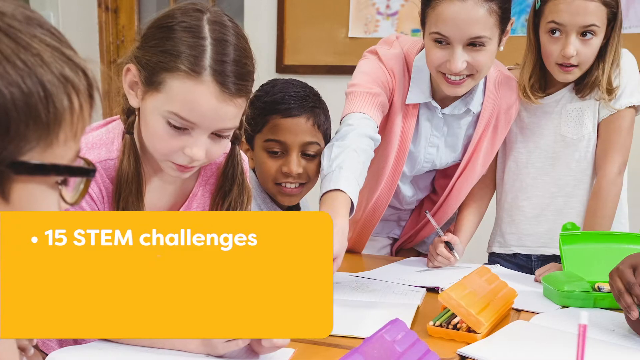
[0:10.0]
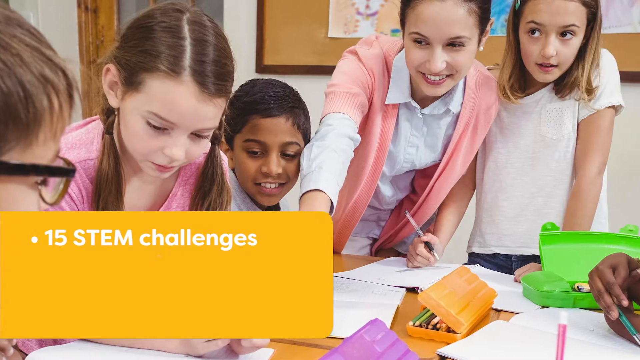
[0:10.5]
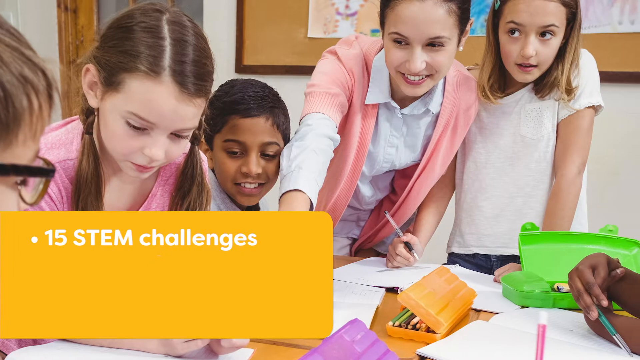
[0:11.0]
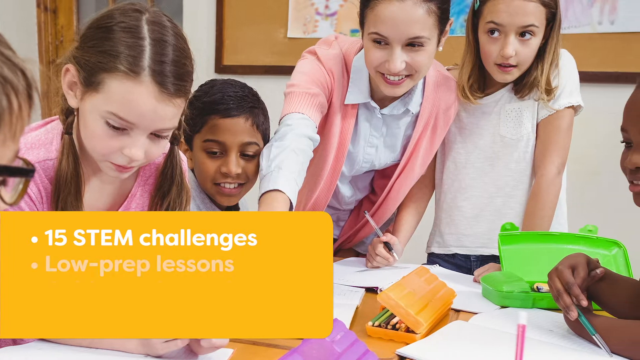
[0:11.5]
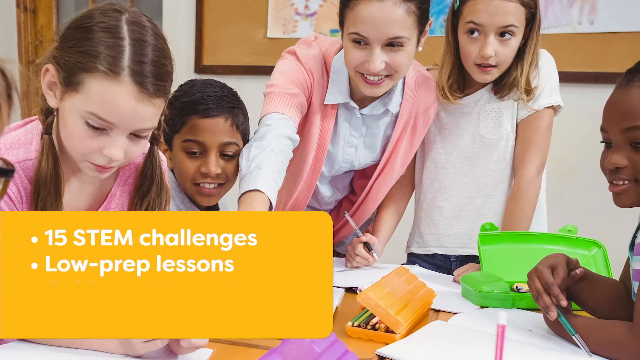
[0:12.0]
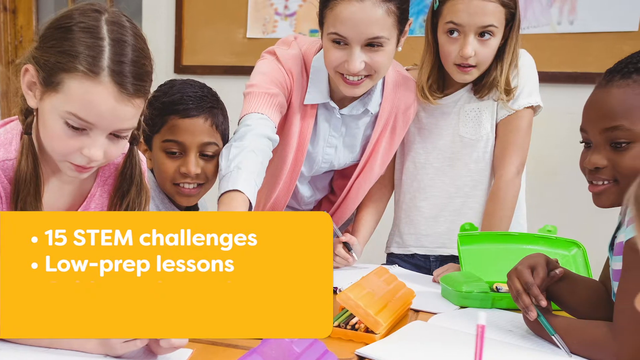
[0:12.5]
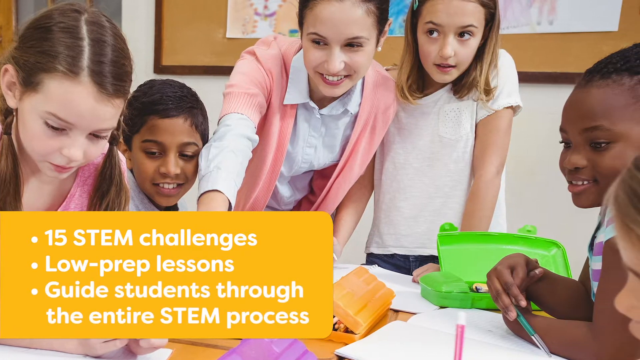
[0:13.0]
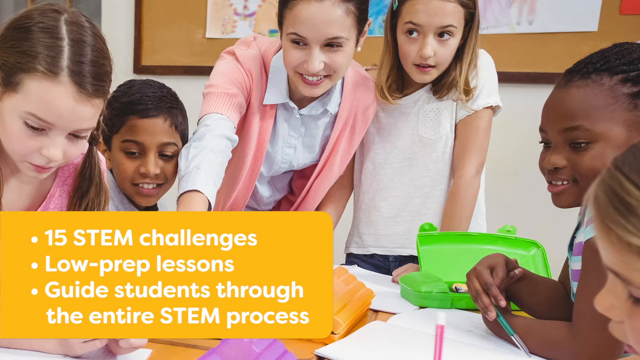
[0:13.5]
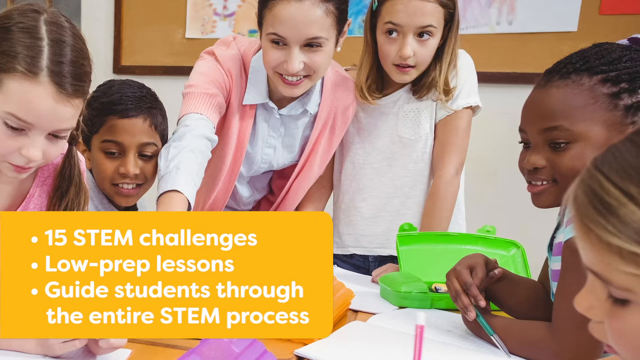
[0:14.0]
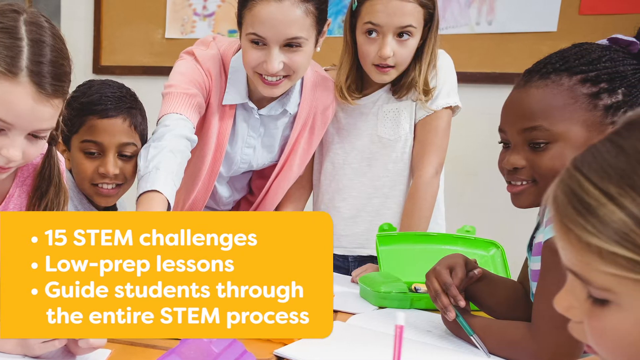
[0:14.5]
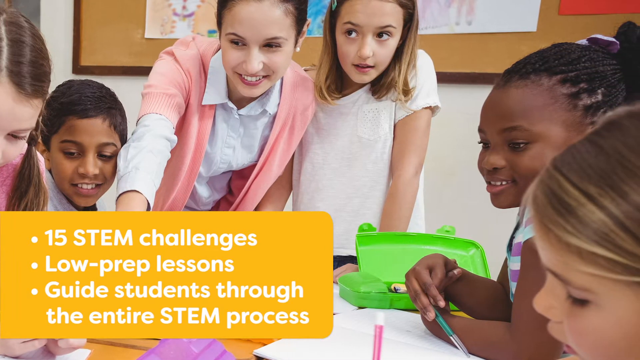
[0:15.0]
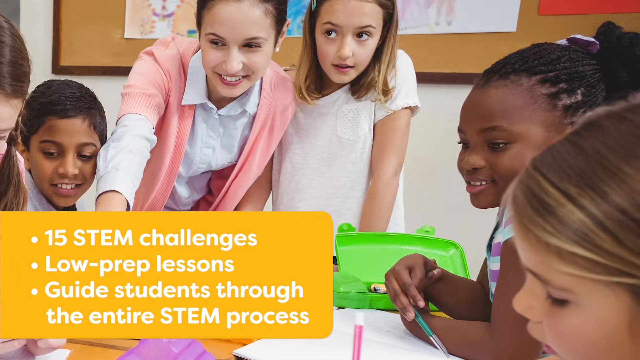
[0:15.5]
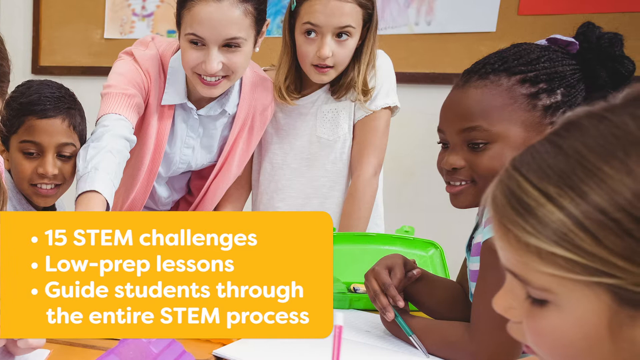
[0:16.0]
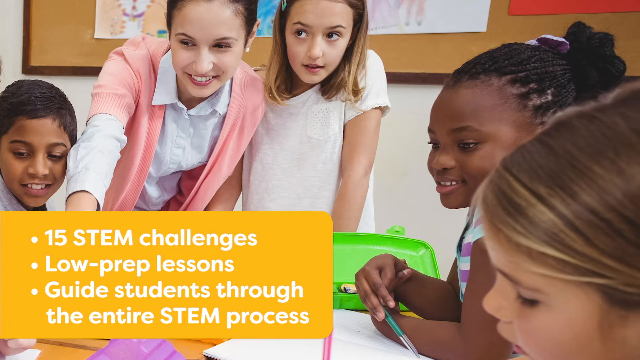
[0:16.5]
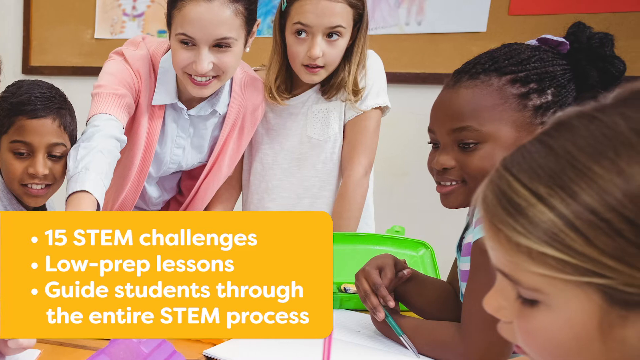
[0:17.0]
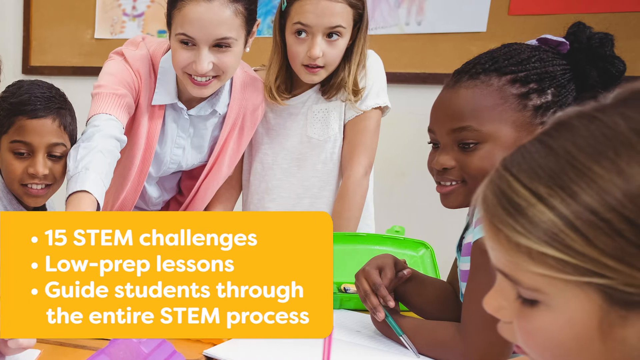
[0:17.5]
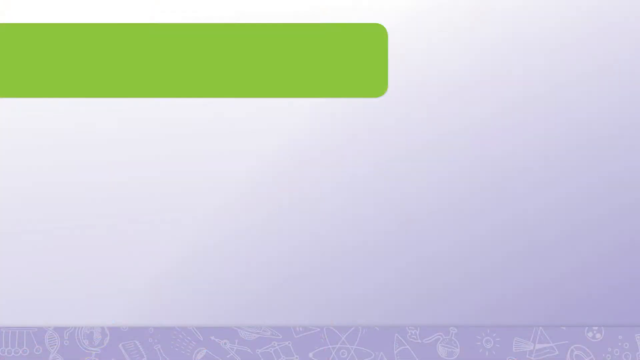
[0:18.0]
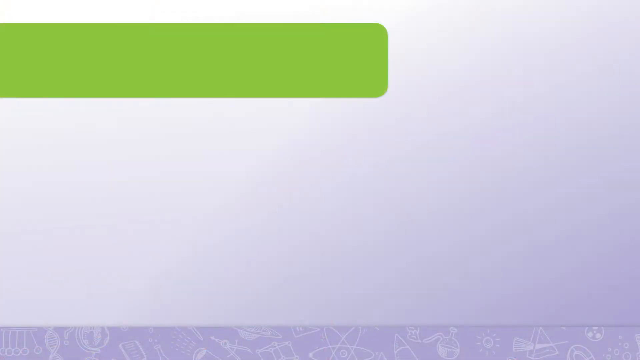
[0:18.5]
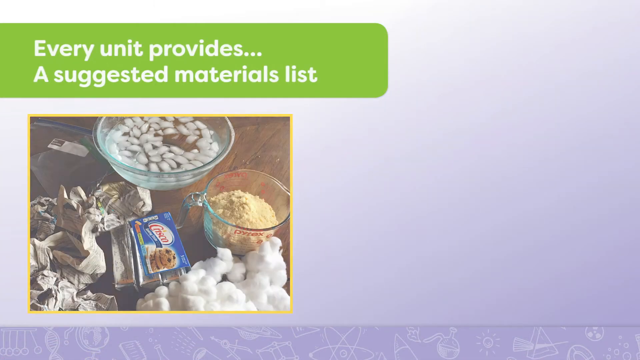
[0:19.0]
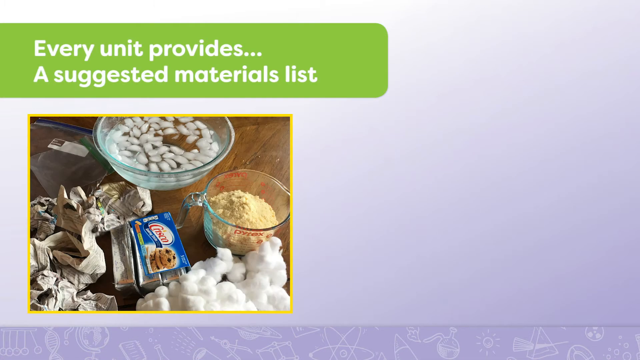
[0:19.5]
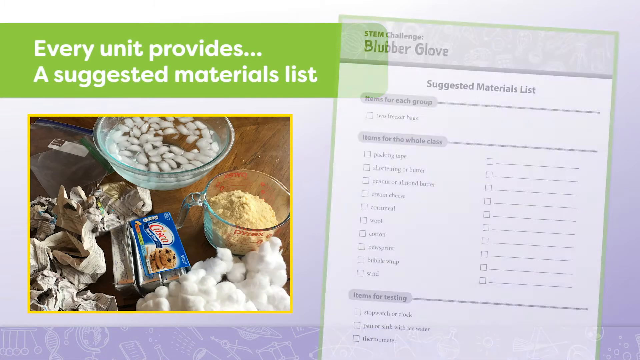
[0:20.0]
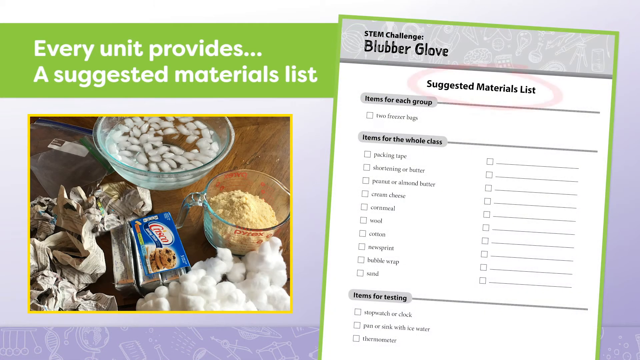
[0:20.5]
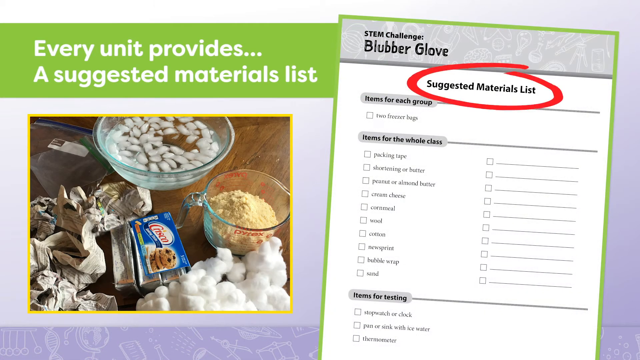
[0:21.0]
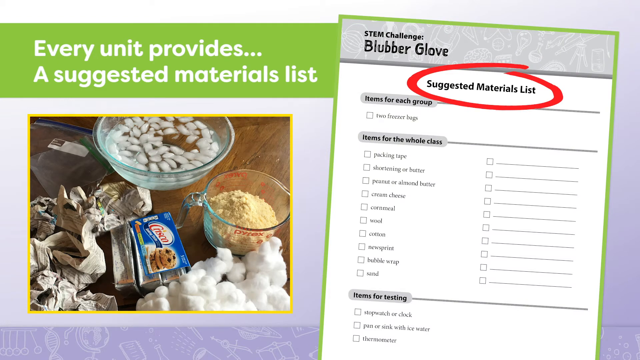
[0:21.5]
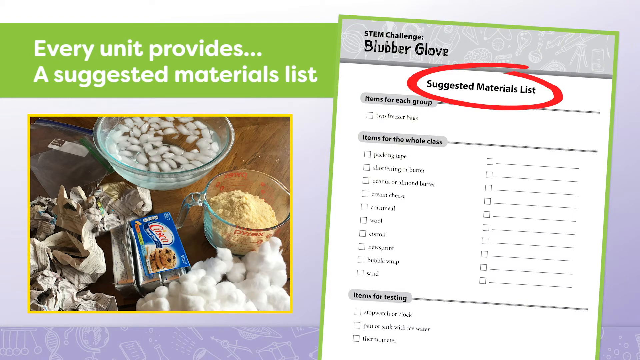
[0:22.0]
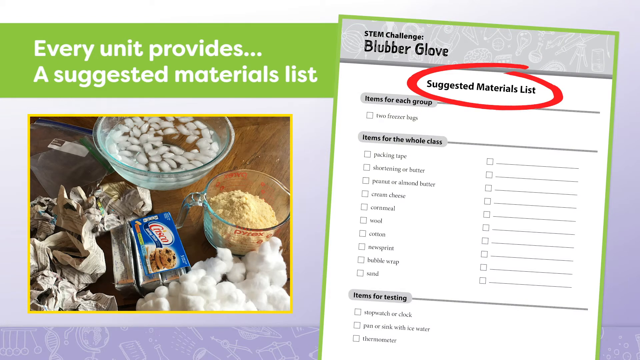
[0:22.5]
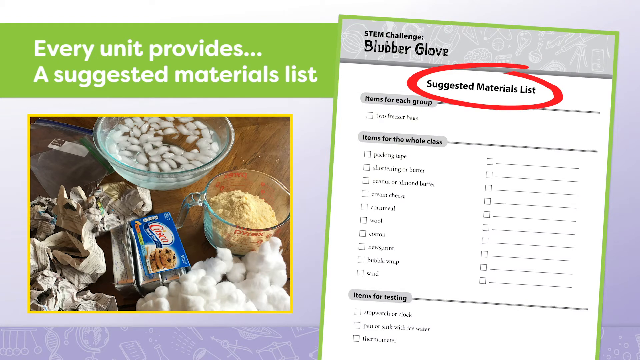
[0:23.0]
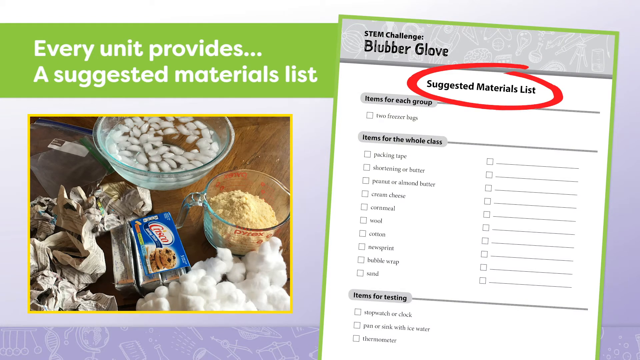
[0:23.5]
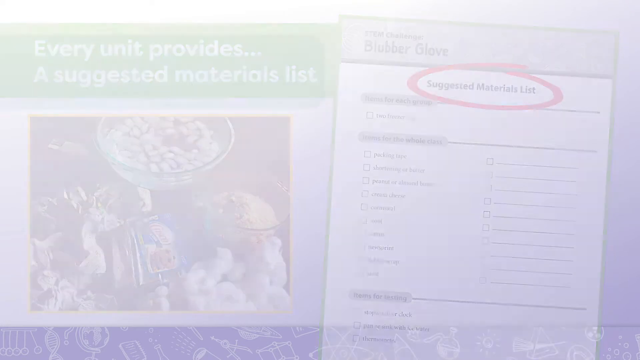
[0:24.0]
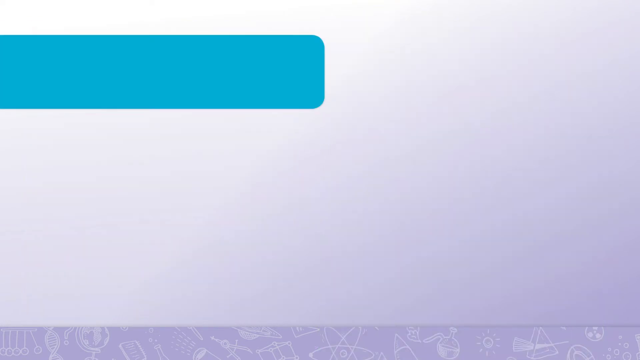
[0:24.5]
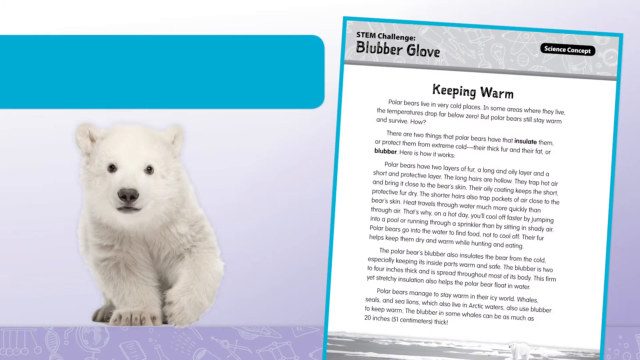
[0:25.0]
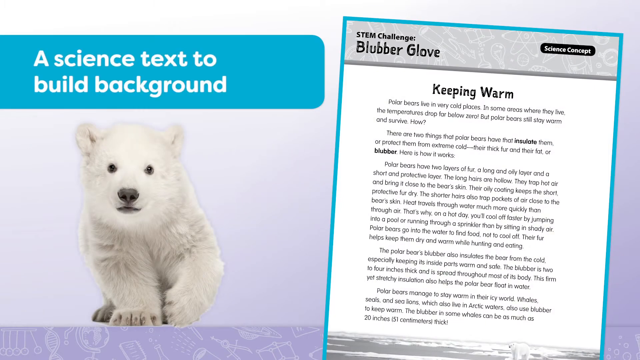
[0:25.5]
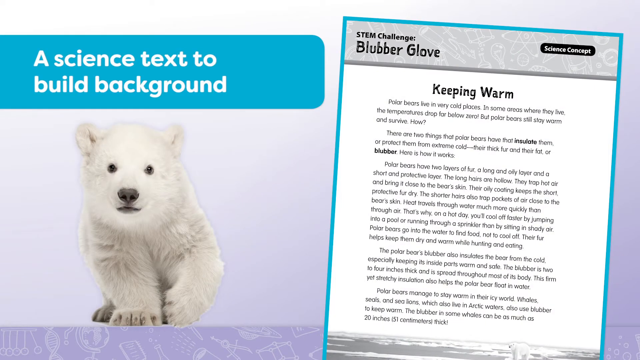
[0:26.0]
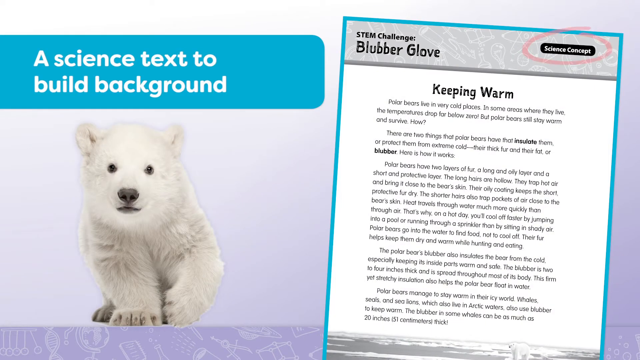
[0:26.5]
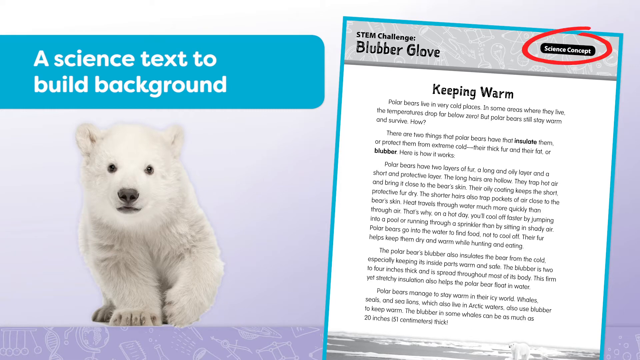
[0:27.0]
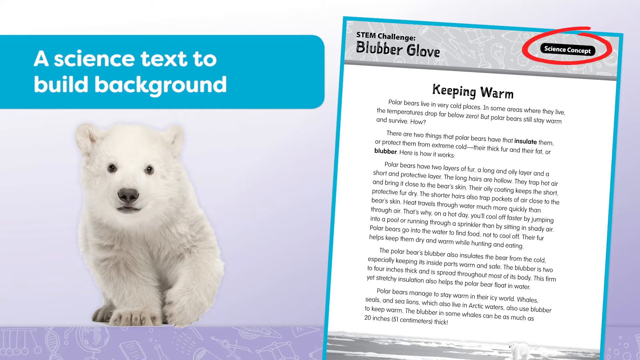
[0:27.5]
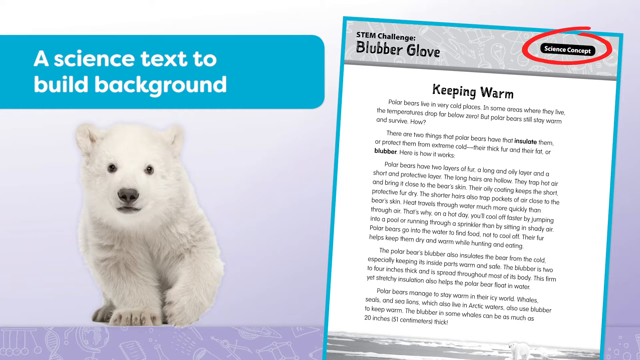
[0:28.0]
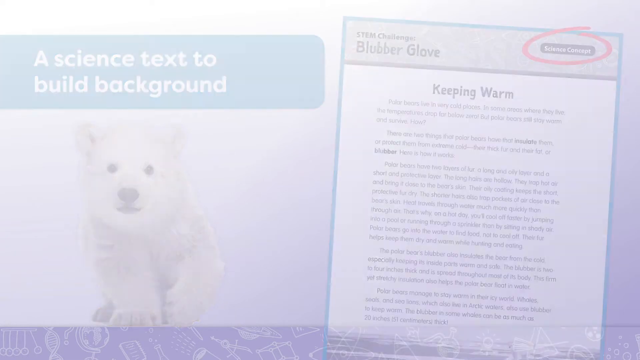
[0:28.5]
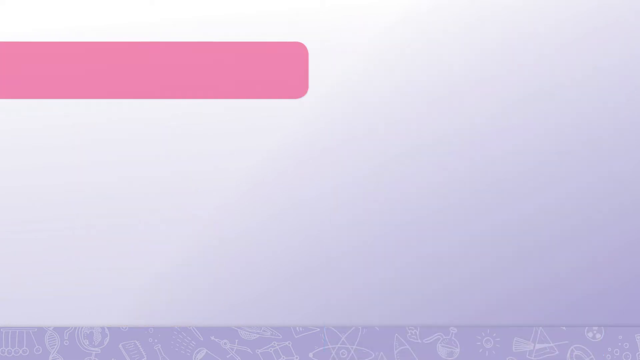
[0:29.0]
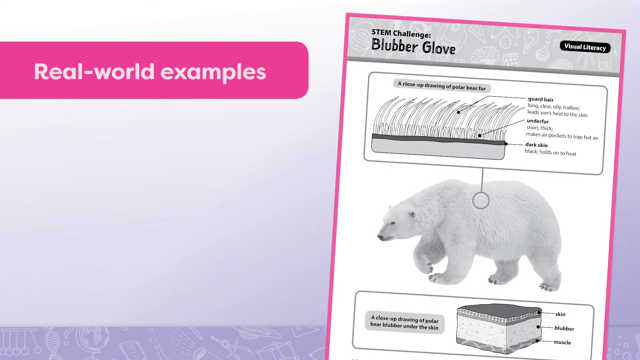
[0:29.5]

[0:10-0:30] Text about STEM lessons and learning challenges for grade one to six appears, followed by the STEM book, with its contents highlighted. Text reads "help today's students become tomorrow's innovators." Kids look into the book; some sit at the table while others stand, possibly because of space. Text on the screen reads "15 STEM challenges, low prep lessons, guide students through the entire STEM process." Next, text reads "every unit provides a suggested material list," and a material list is shown, apparently part of the challenges in the book. Text about text to build background appears with a story, and behind the title there is a white bear. The screen then goes through the bear with explanations.